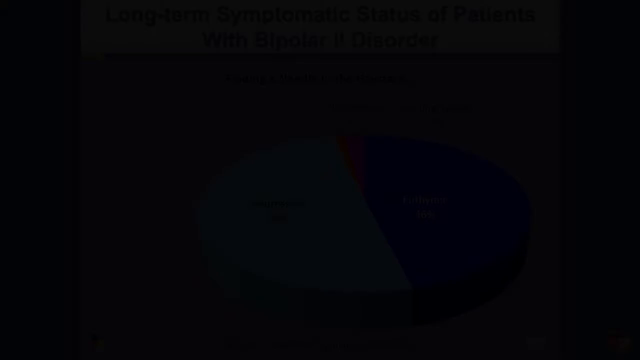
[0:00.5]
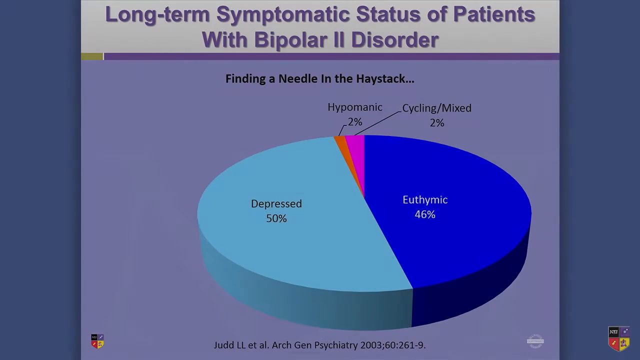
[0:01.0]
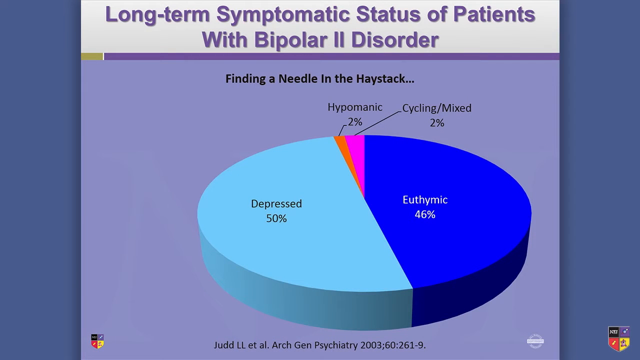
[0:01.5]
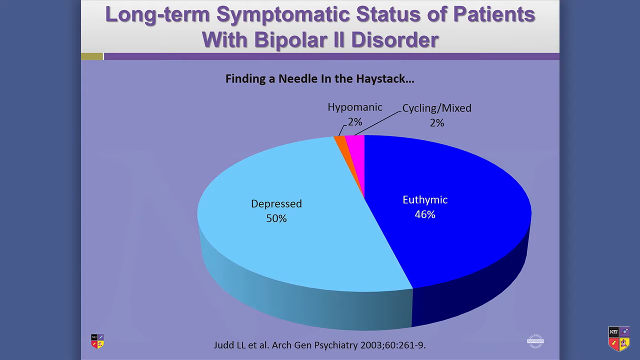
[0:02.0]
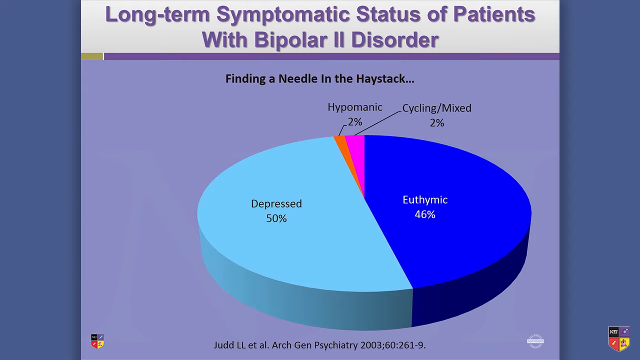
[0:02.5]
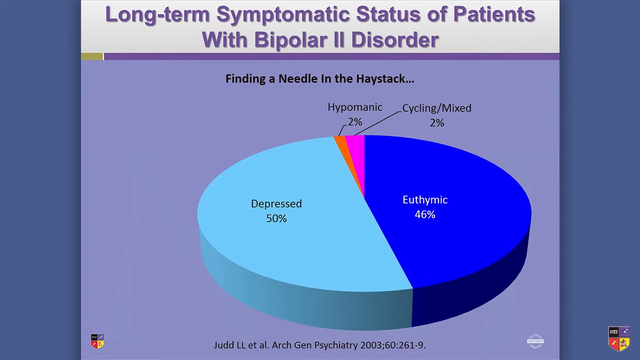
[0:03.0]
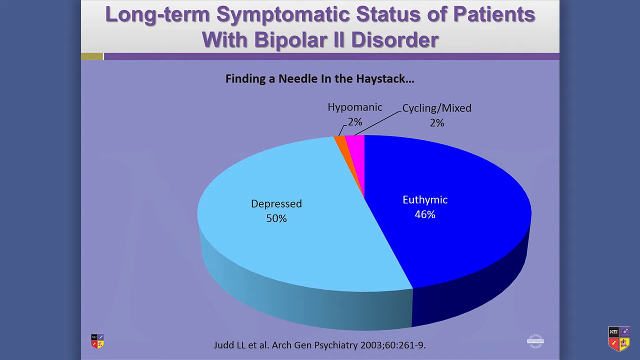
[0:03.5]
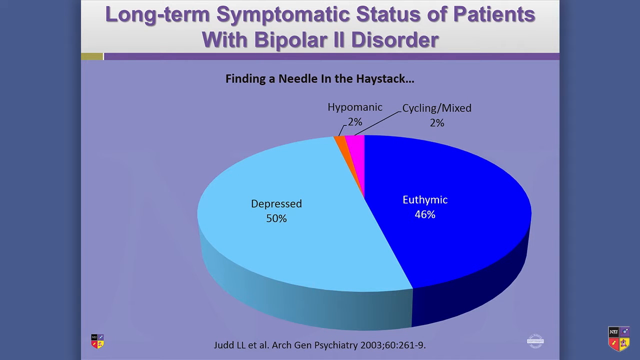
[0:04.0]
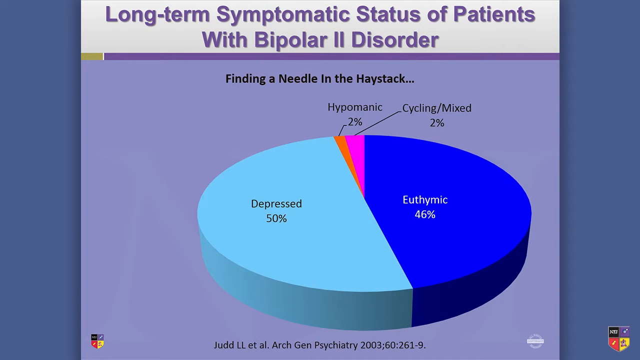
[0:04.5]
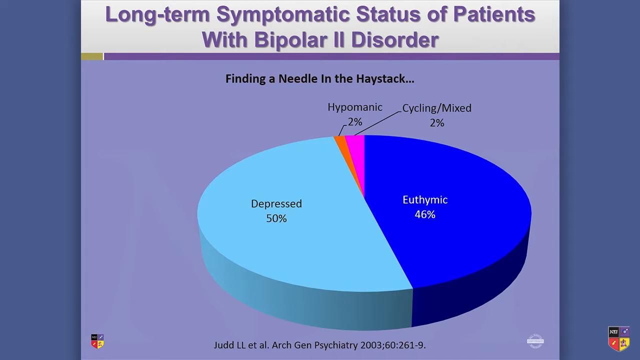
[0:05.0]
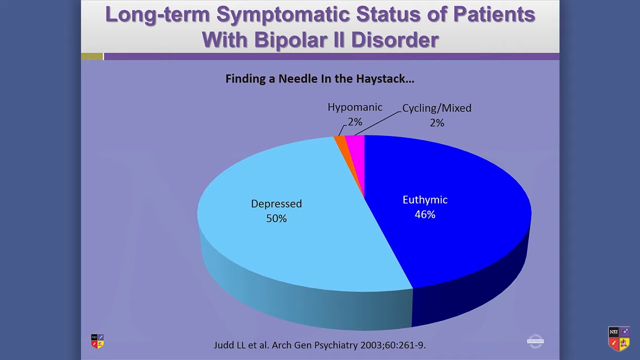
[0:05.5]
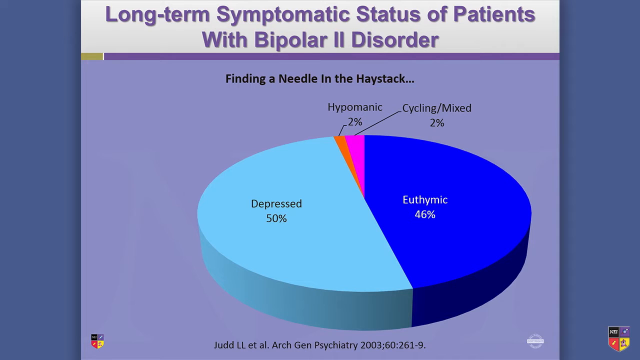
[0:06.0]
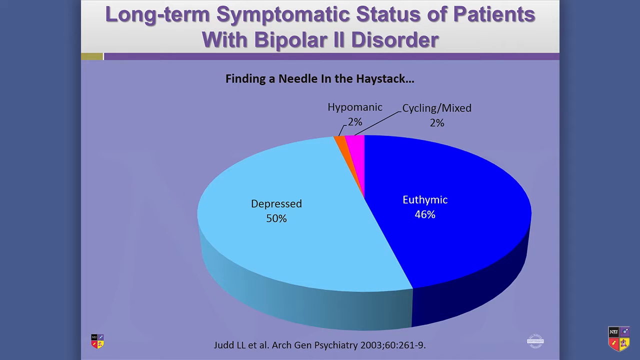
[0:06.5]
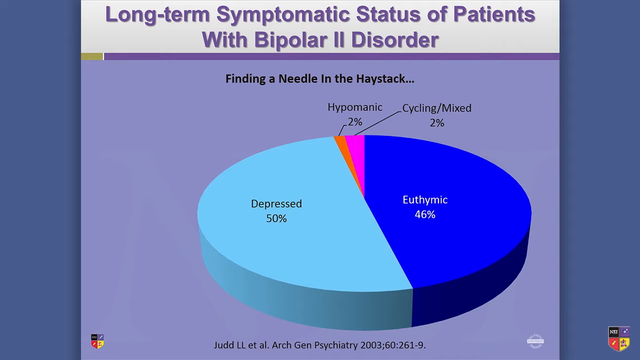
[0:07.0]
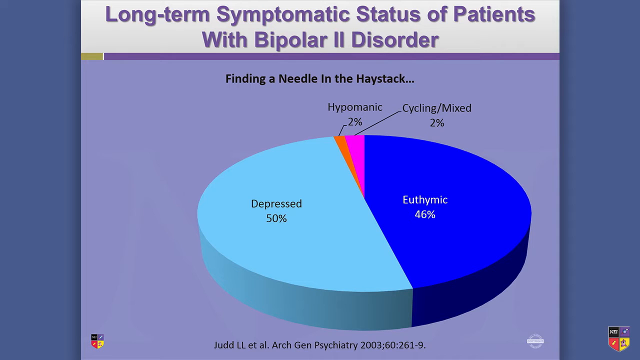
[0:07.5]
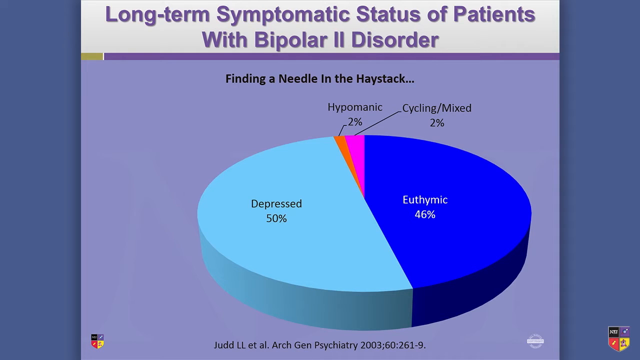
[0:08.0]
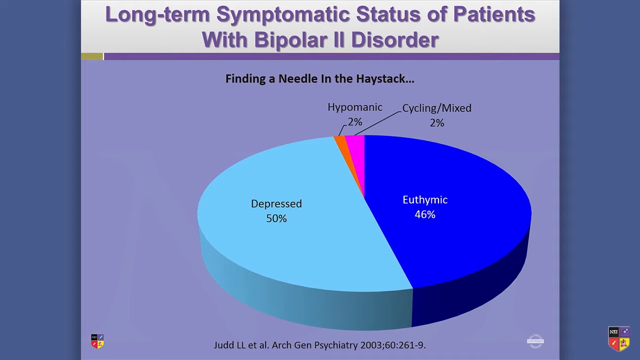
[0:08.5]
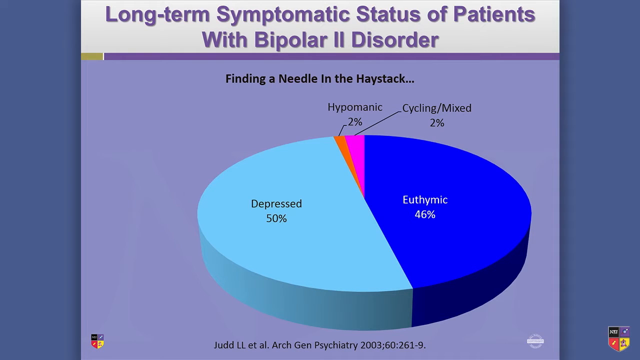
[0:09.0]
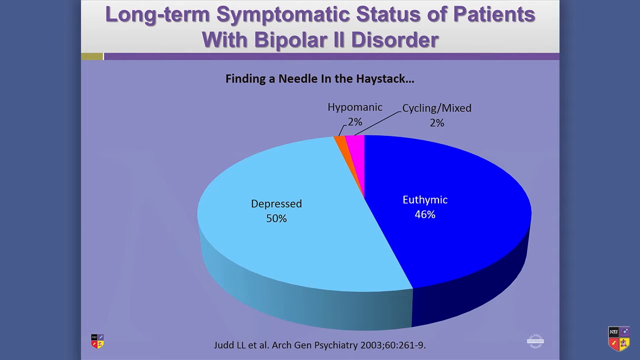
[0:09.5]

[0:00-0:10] A slide shows a pie chart about the long-term systematic status of patients with bipolar 2 disorder. Depressed makes up 50% in light blue, a dark blue segment makes up 46%, hypomanic makes up 2%, and cycling/mixed makes up another 2%. These are apparently certain symptoms of bipolar disorder, with the percentages showing where patients lie. The slide also says "finding a needle in a haystack." The slide is basically purple with purple lettering; the only things not purple are the pie chart itself and some of the text, some of which is black. Everything else is in different shades of blue, except for orange for the 2% hypomanic segment and violet for the 2% cycling/mixed segment.